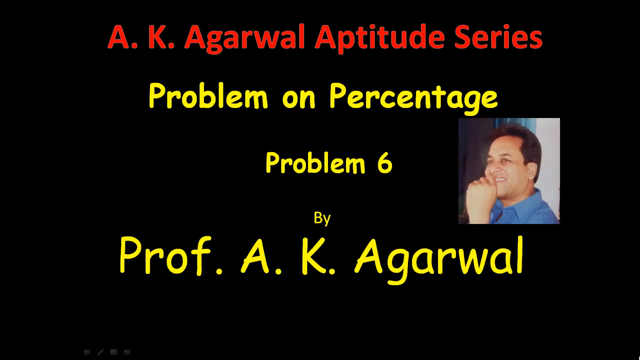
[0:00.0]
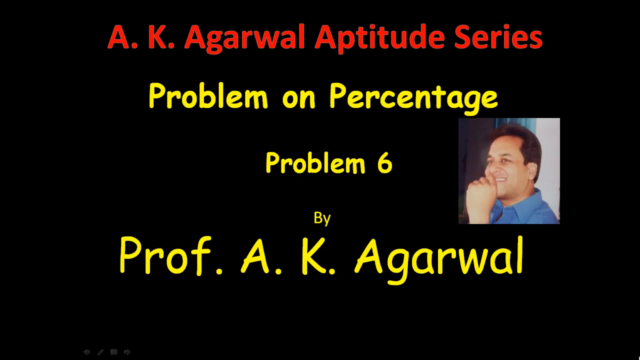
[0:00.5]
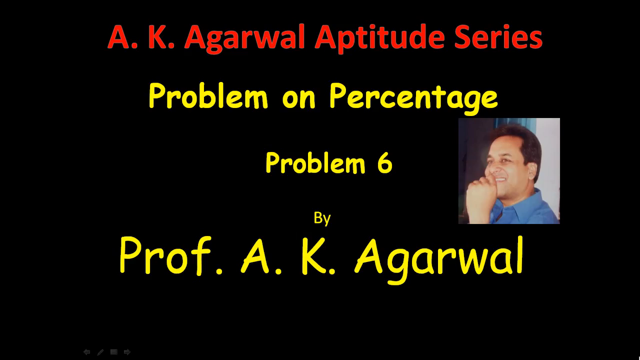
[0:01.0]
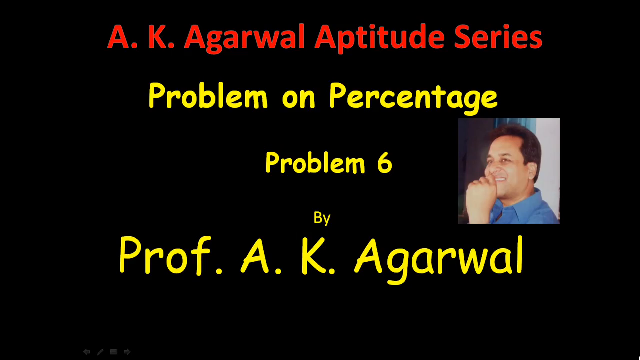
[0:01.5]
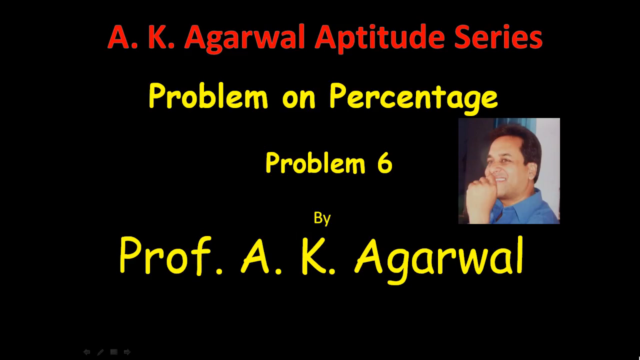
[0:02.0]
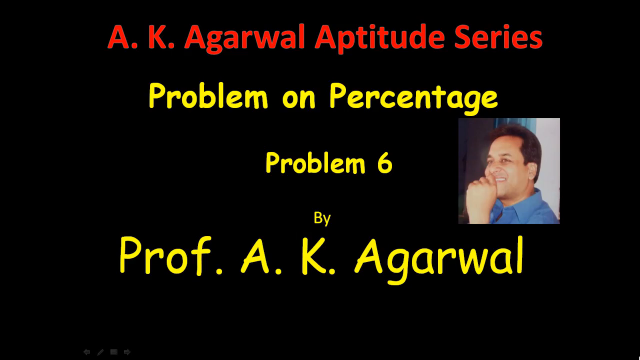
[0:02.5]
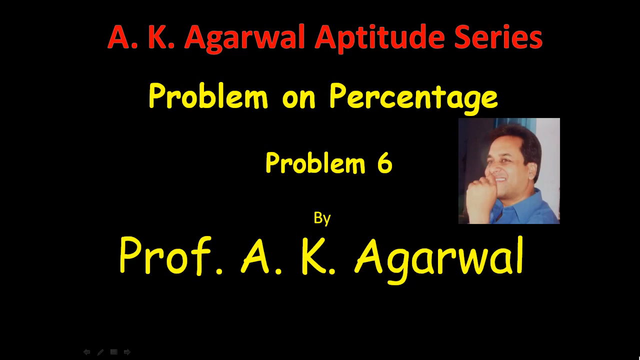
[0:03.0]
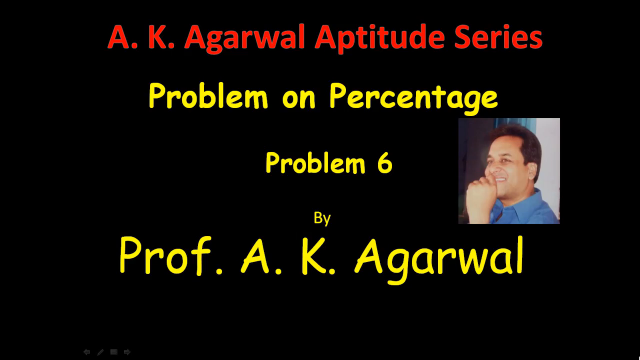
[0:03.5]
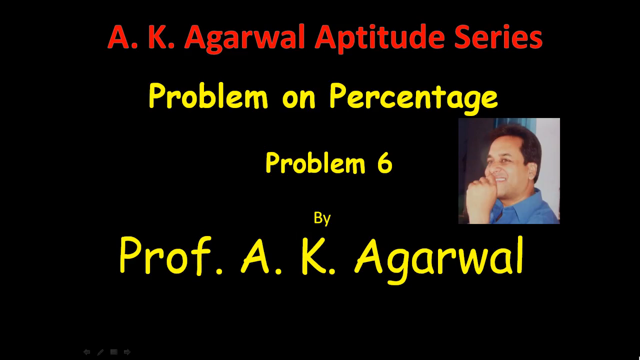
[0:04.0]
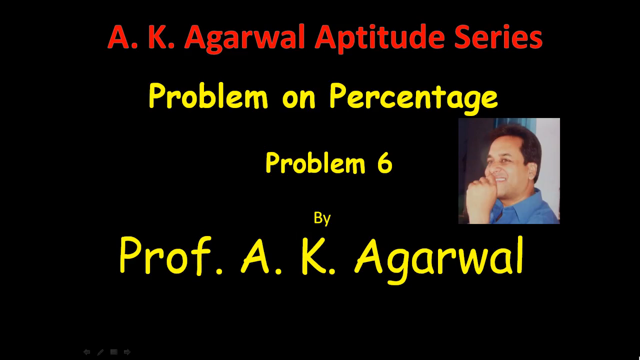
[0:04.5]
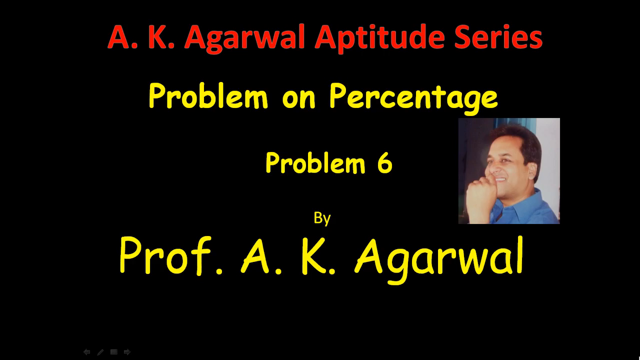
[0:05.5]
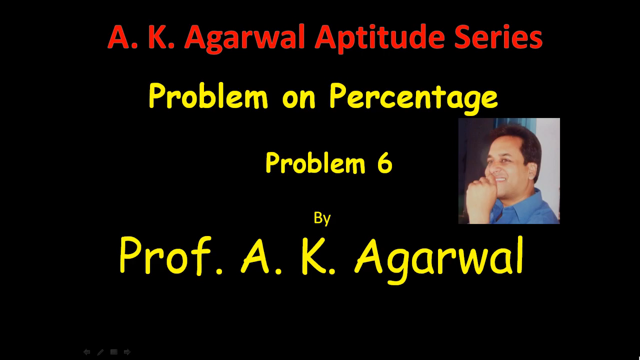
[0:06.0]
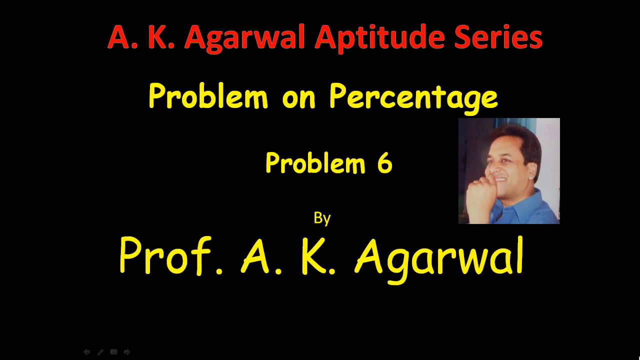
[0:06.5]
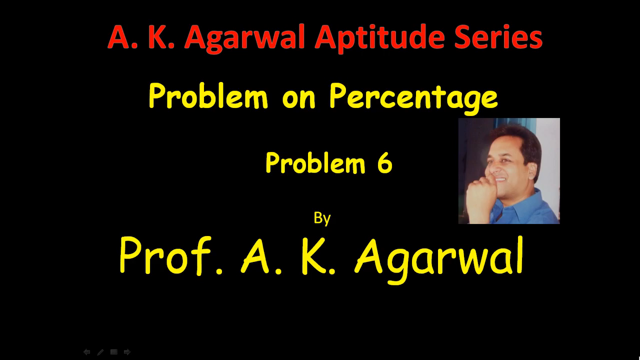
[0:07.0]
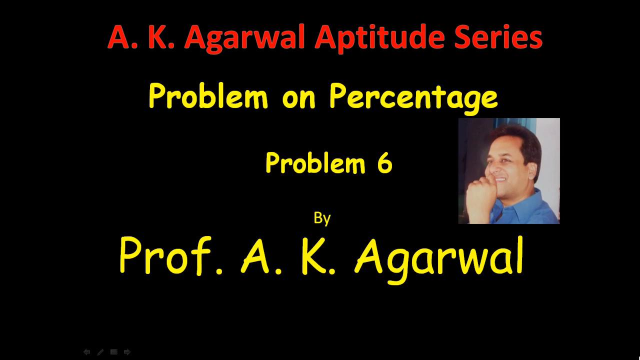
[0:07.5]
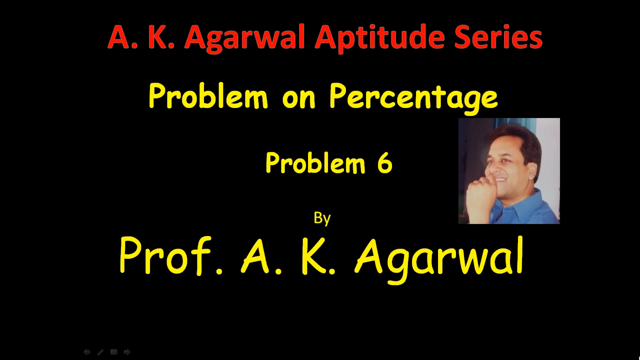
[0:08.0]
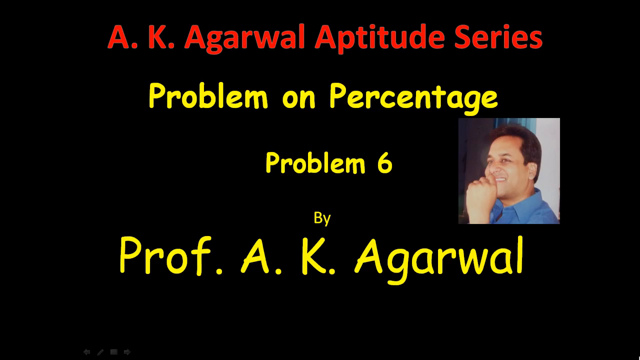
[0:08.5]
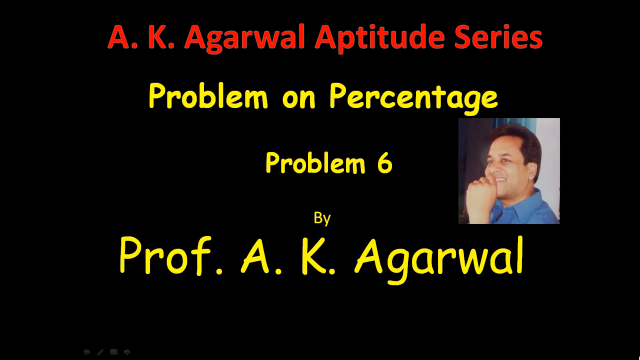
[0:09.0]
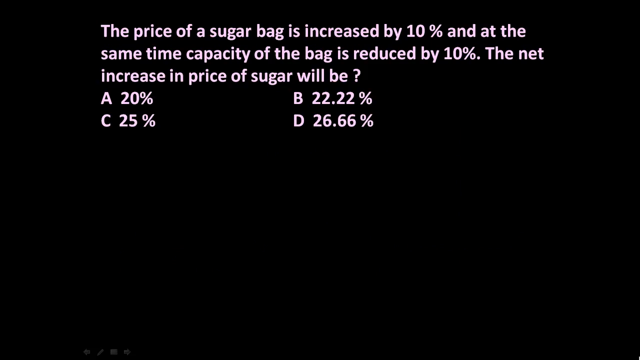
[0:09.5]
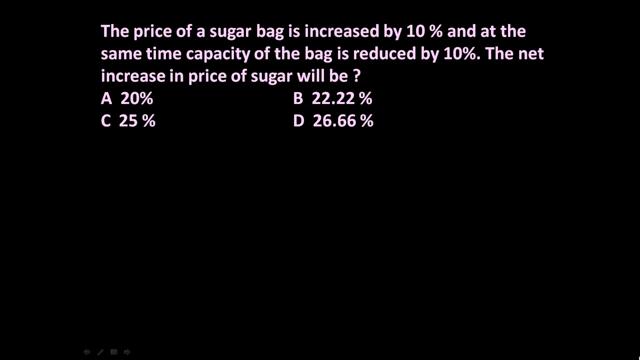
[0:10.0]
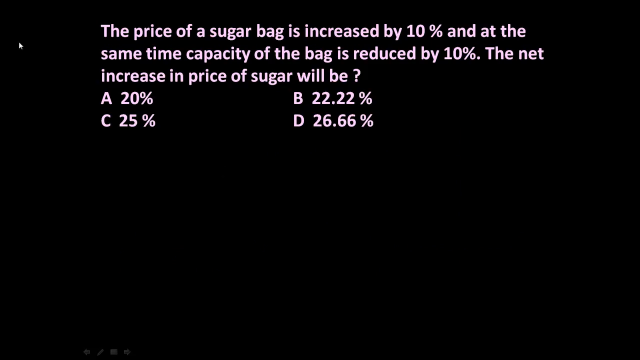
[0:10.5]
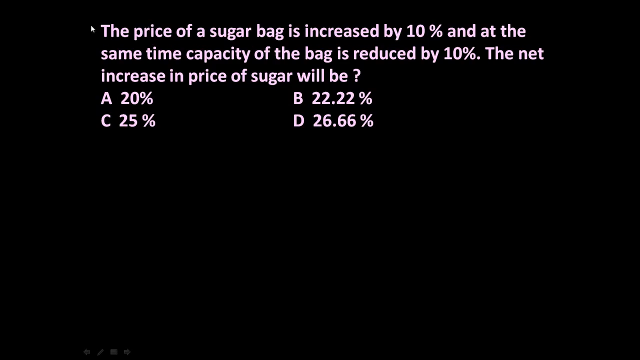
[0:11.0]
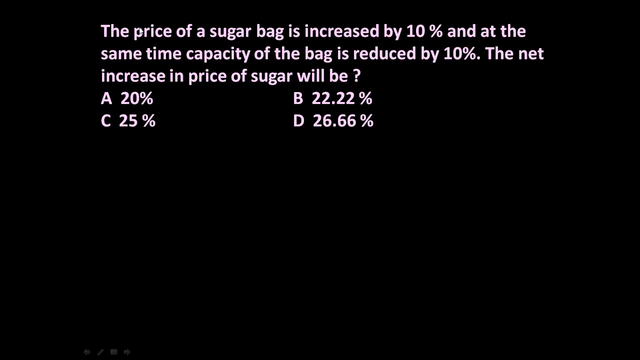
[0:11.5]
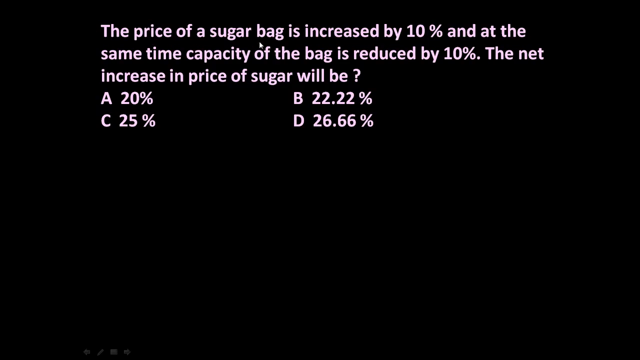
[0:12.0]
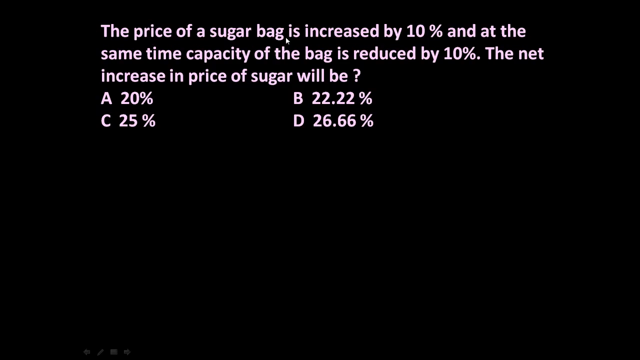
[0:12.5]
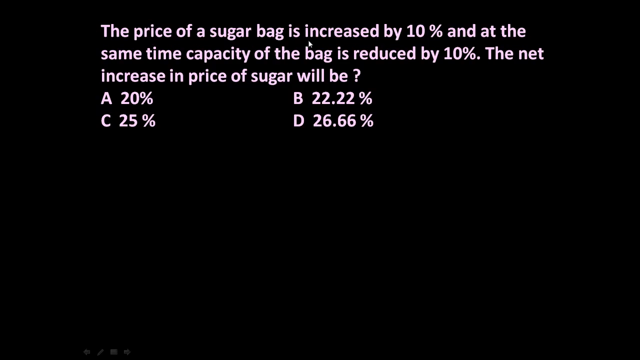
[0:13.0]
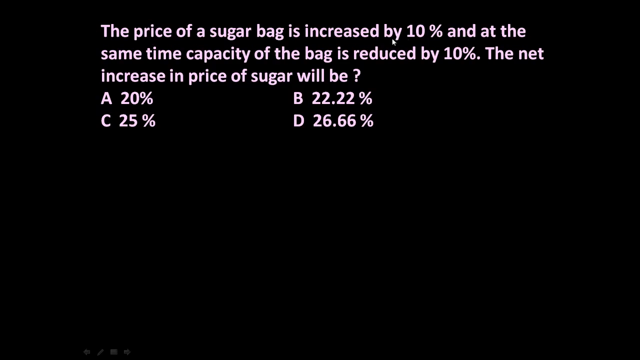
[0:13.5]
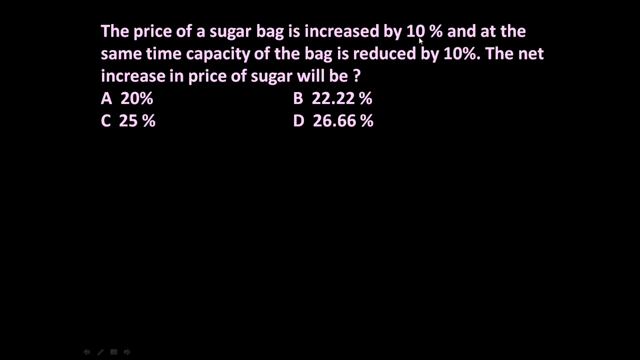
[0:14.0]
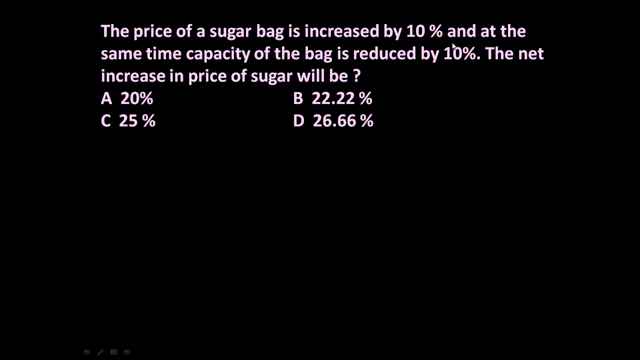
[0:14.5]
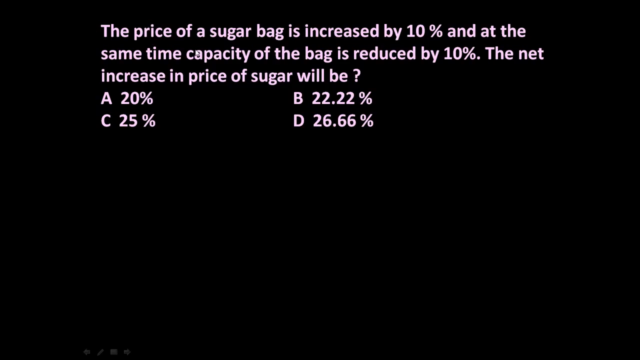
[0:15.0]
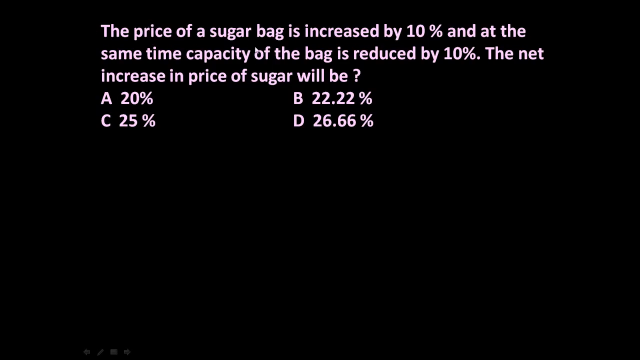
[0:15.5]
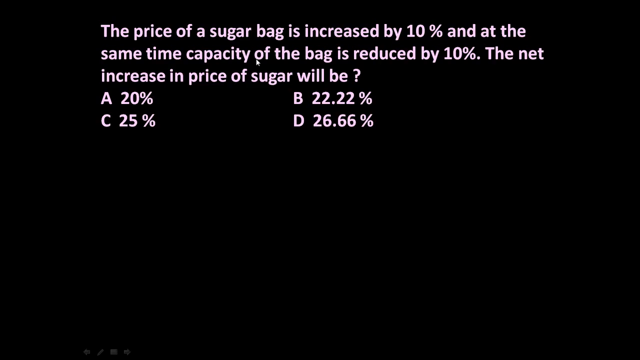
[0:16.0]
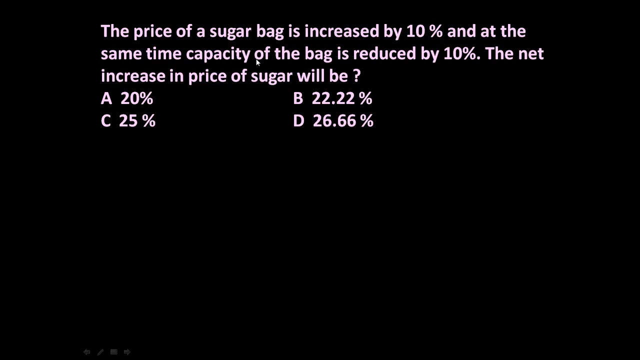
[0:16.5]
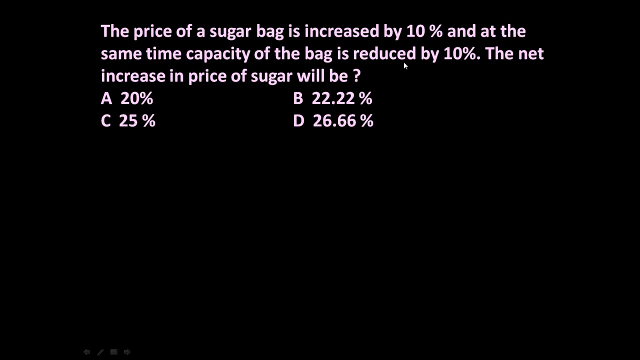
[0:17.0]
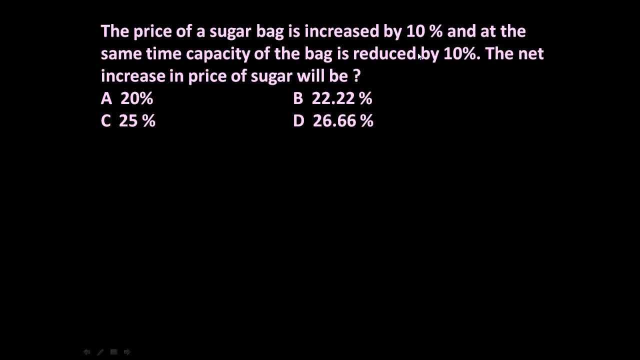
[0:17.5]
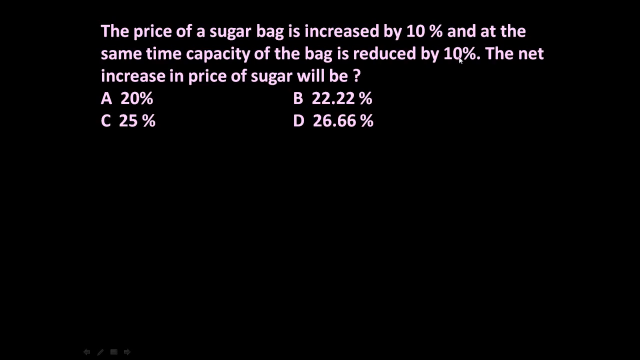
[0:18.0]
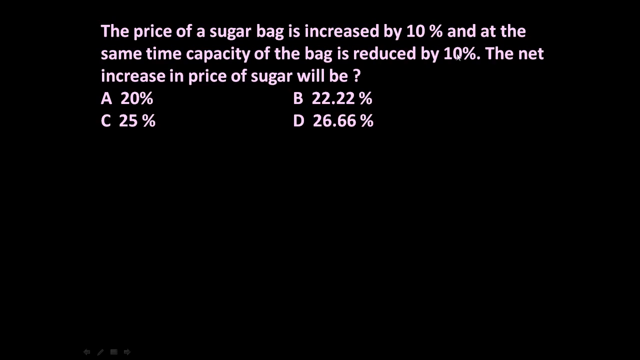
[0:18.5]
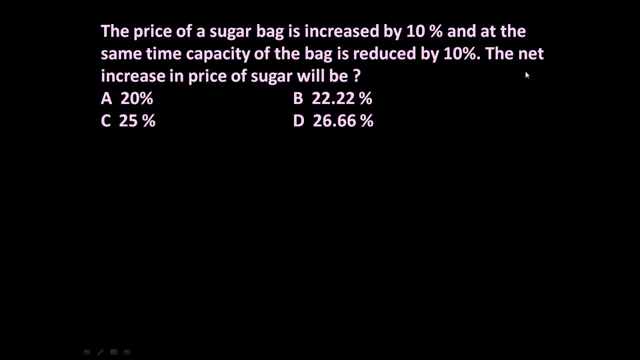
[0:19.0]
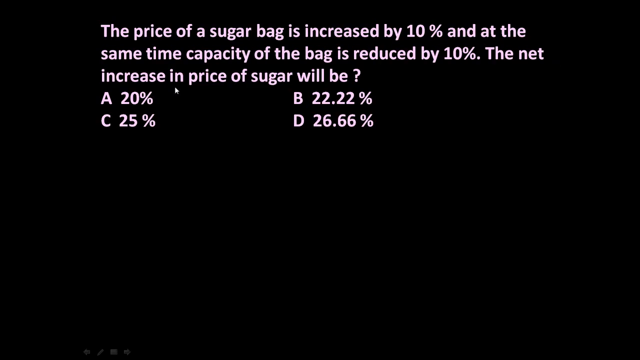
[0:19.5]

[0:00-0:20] A black slide background carries red and yellow text. At the top, red text reads "A.K. Agarwal aptitude series," the title of this series of videos. The specific title of this video, "Problem on Percentage," appears in yellow text, with "problem six" under it. Underneath is "by," and under that "Prof. A.K. Agarwal." An image of an Indian professor is shown just above this text. The slide advances to a math problem with four multiple choice answers. The question is at the top of the screen in white text and reads "the price of sugar bag is increased by 10 percent. And at the same time, capacity of the bag is reduced by 10 percent. The net increase in price of sugar will be," followed by four answers: "A. 20 percent," "B. 22.22 percent," "C. 25 percent," "D. 26.66 percent." A cursor visible on the screen moves through the words of the question from left to right and line by line, likely as the presenter reads the question.